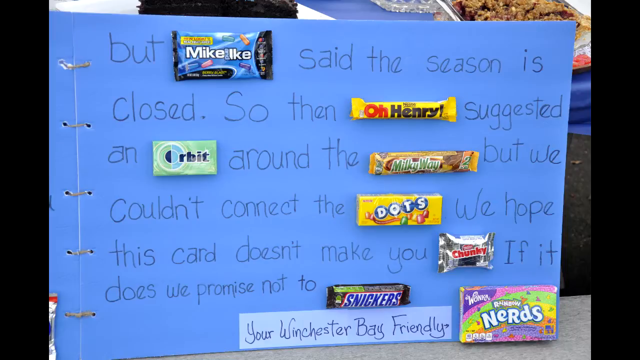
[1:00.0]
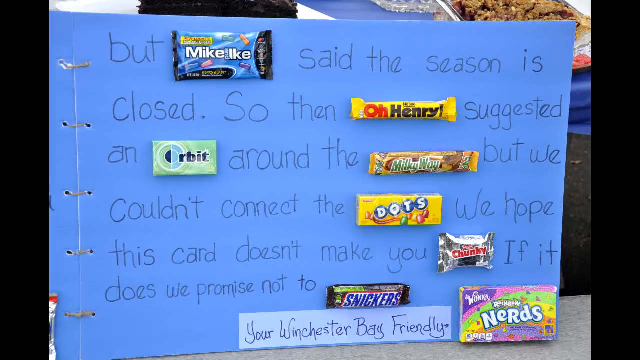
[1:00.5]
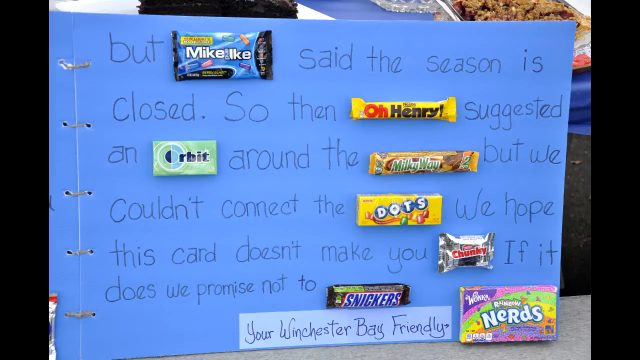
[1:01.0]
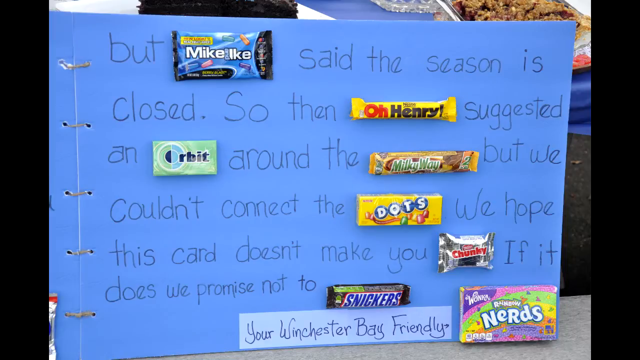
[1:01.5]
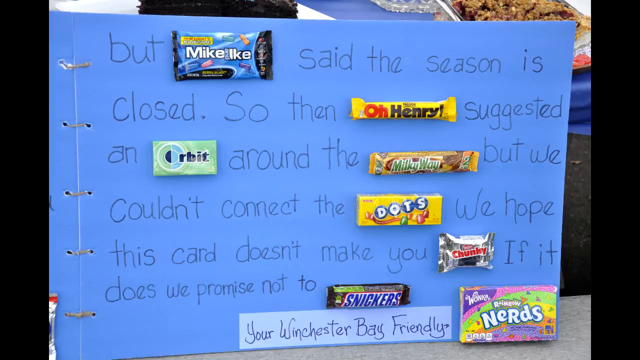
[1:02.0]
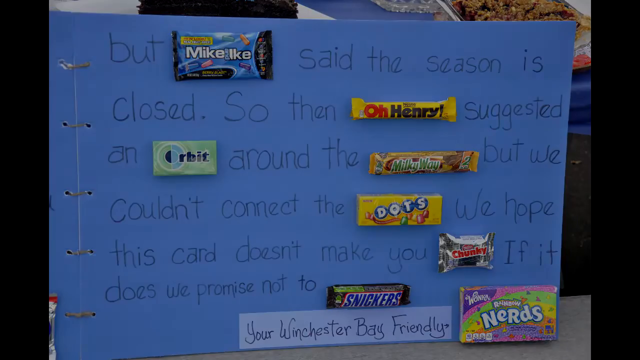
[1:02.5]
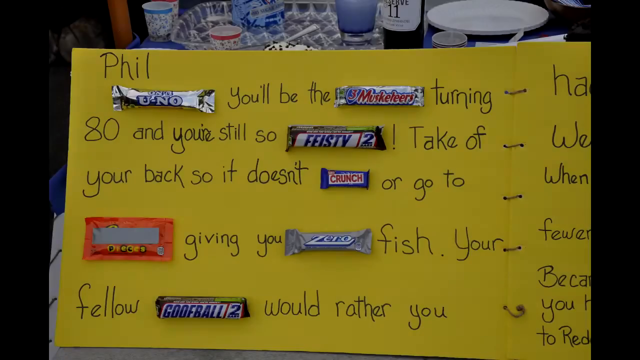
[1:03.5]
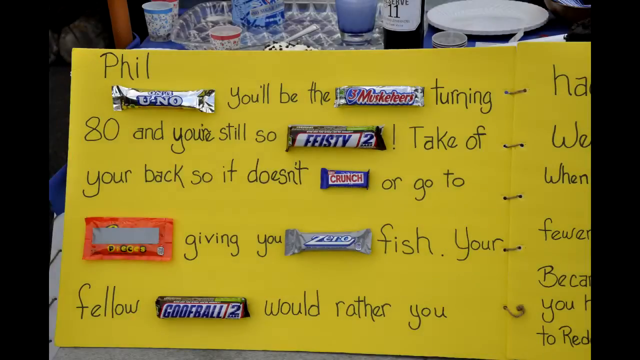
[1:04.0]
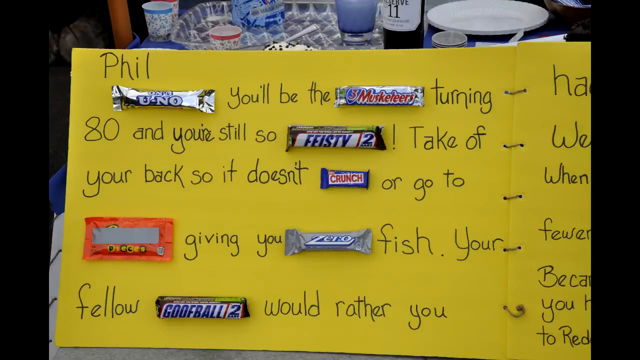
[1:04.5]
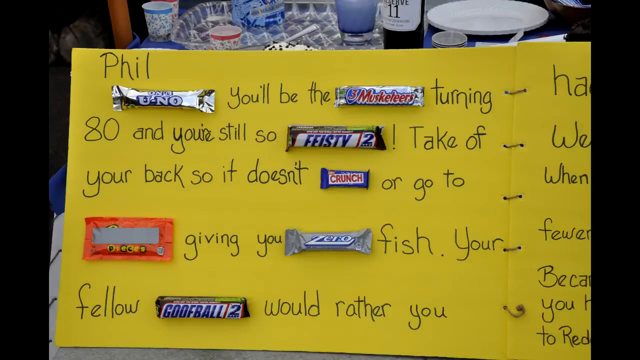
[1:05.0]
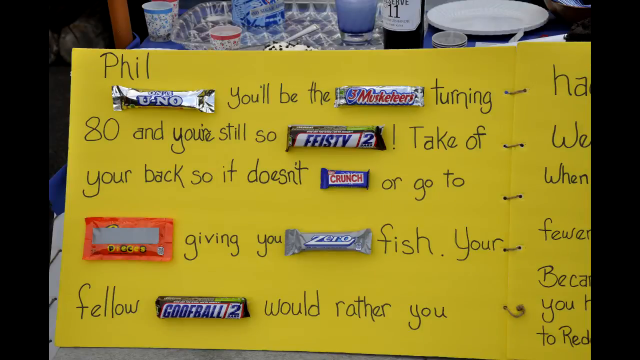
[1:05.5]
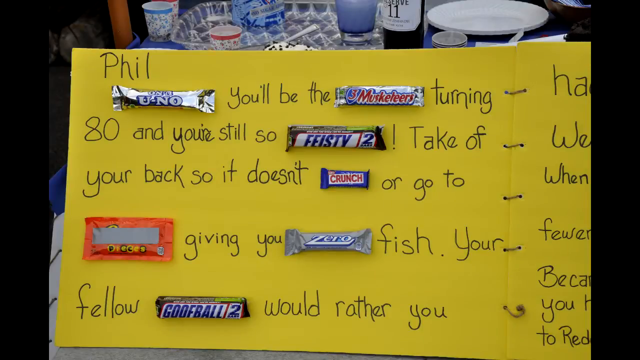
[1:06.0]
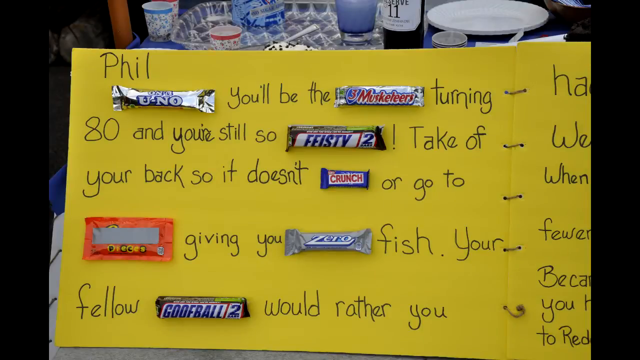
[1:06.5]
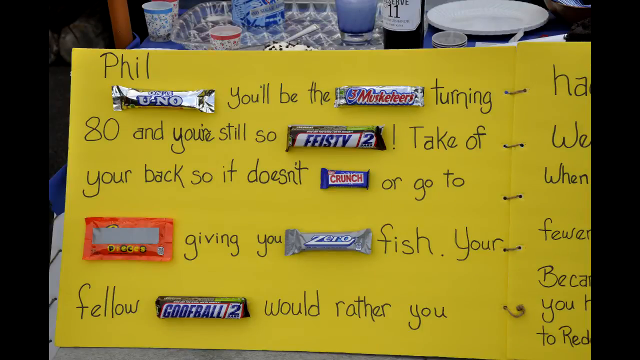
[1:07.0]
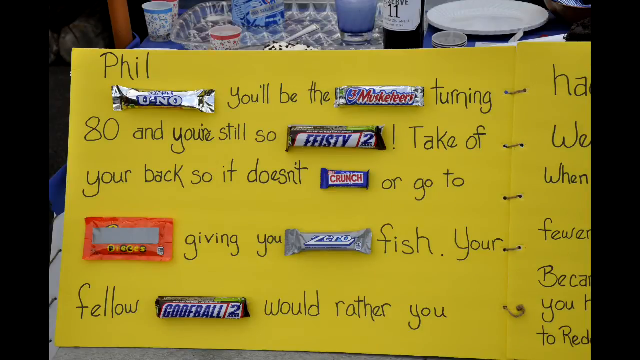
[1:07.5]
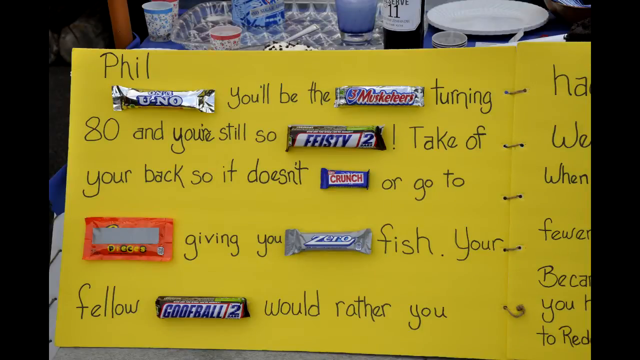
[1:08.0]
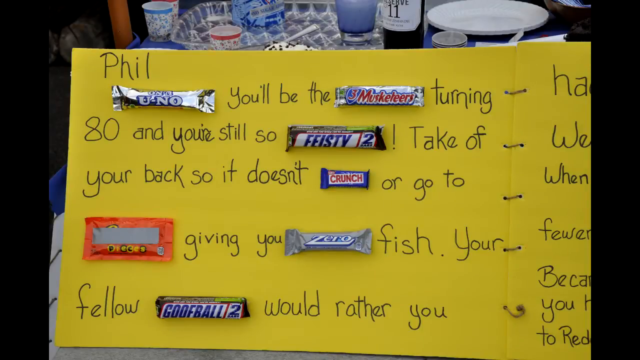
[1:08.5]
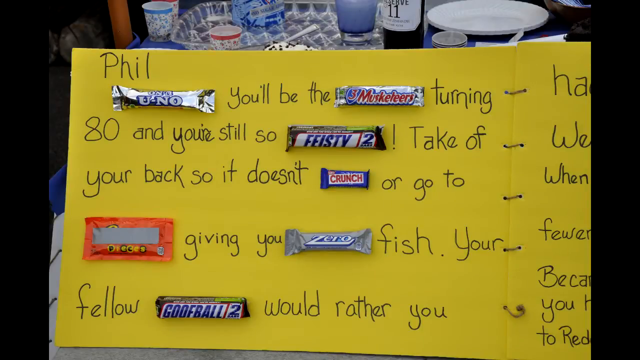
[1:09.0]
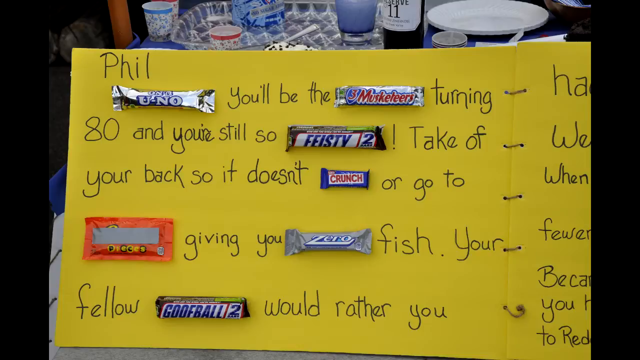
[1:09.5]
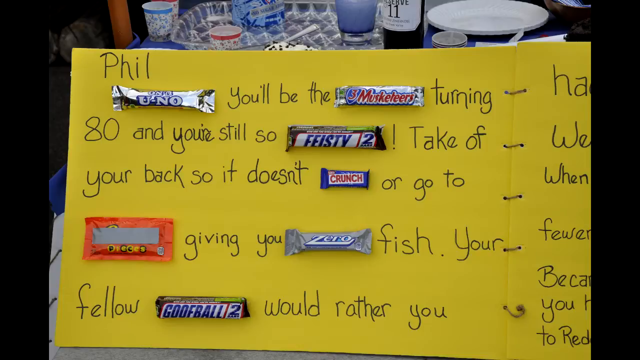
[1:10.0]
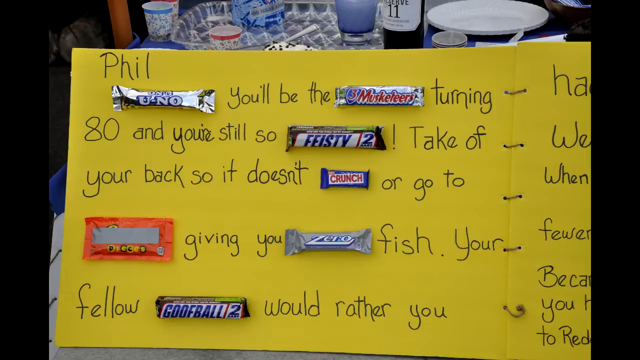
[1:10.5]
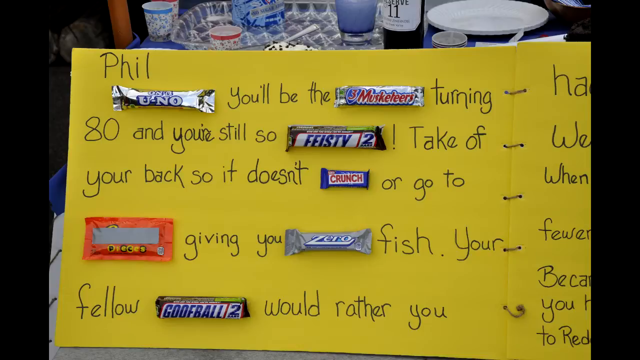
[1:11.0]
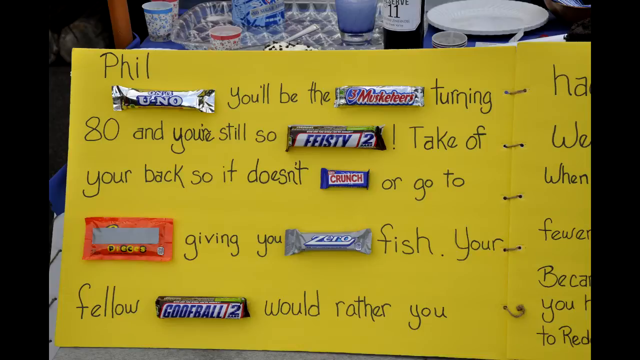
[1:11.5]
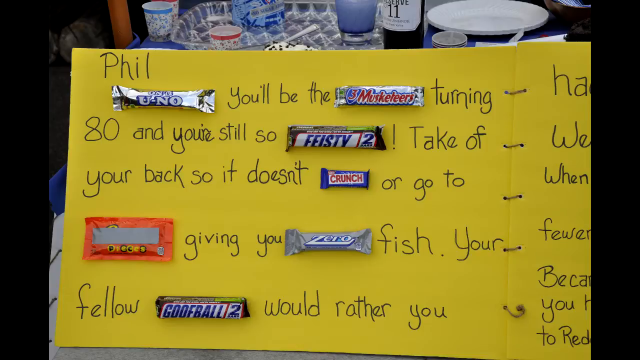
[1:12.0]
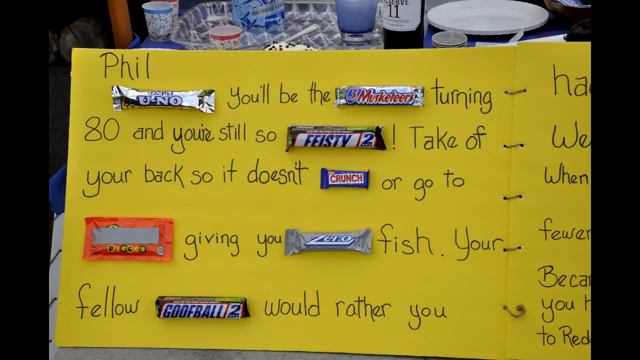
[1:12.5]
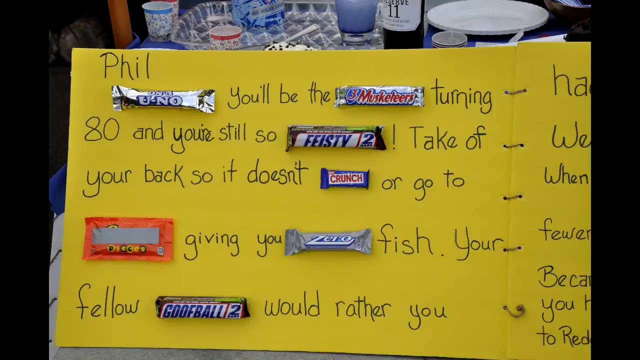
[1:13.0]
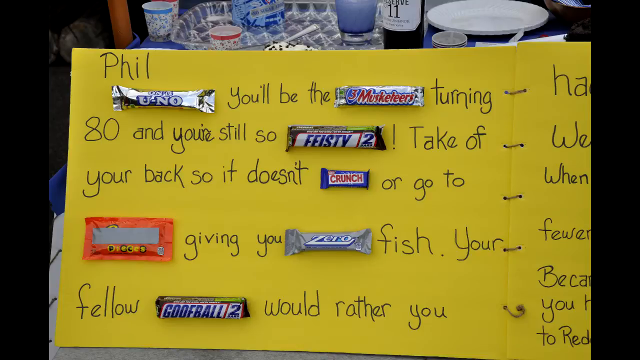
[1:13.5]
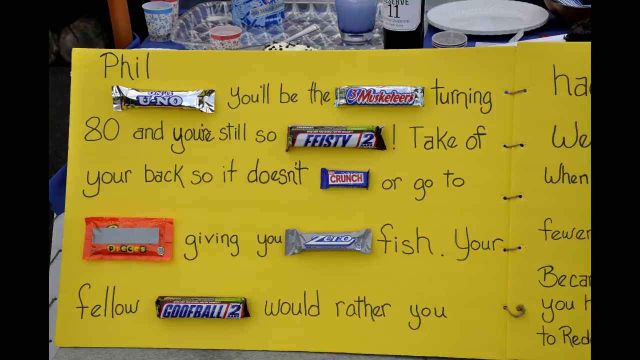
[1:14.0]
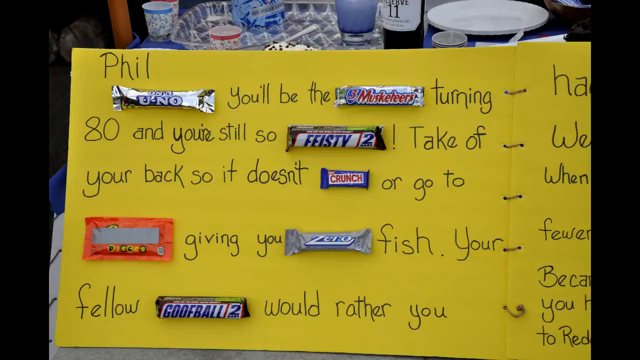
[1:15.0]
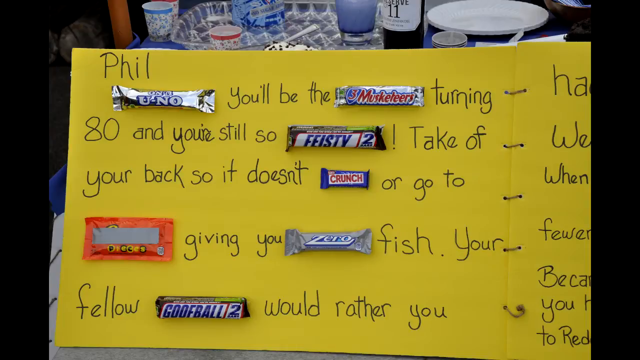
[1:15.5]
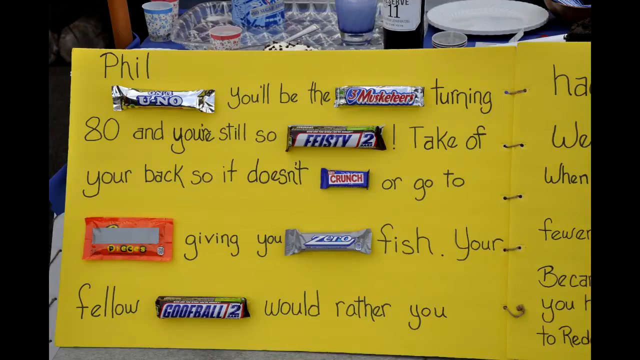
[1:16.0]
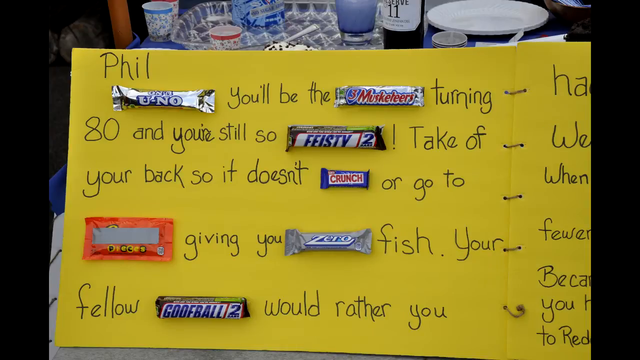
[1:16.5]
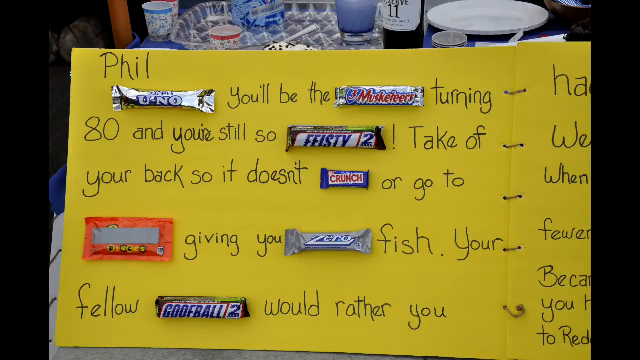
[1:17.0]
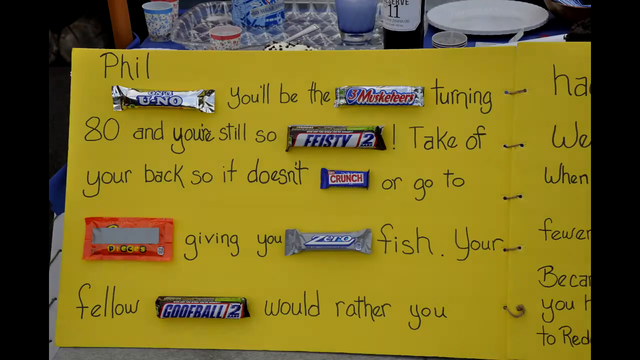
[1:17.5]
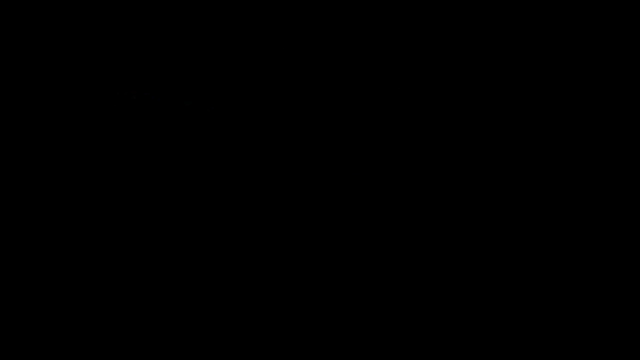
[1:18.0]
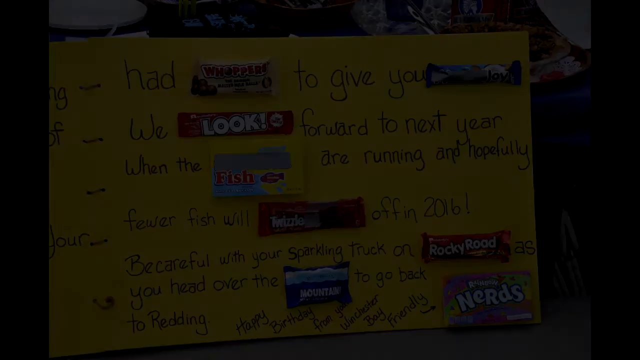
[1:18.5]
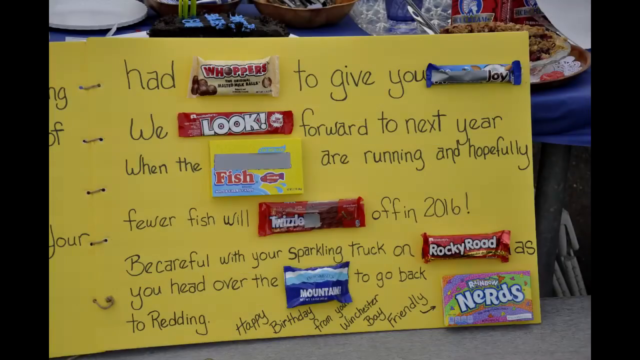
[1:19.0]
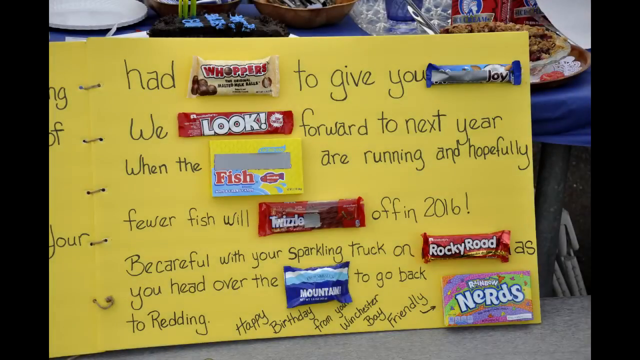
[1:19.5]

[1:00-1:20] A letter or diary has candy wrappers, or possibly real candies, inserted into it. The candies fill in the missing words in the sentences, with different candies carrying different words. The writing is on light sky-blue paper, and the words are written in blue ink. A yellow candy, yellow and black, is then seen on the paper.